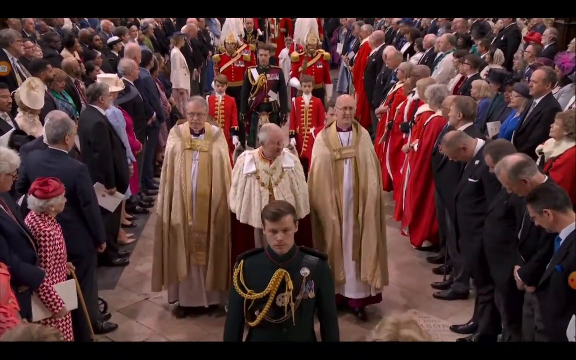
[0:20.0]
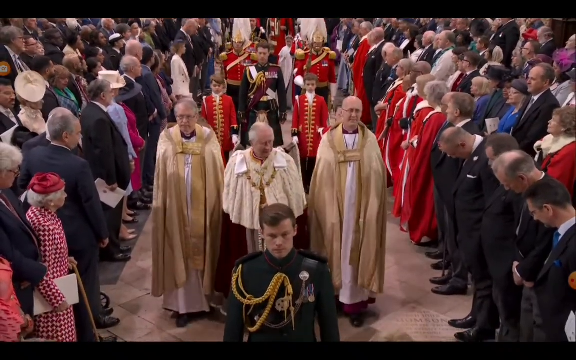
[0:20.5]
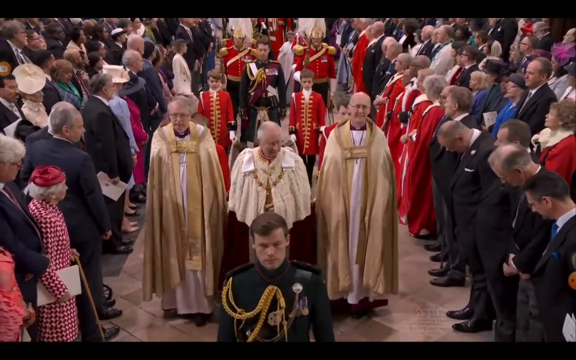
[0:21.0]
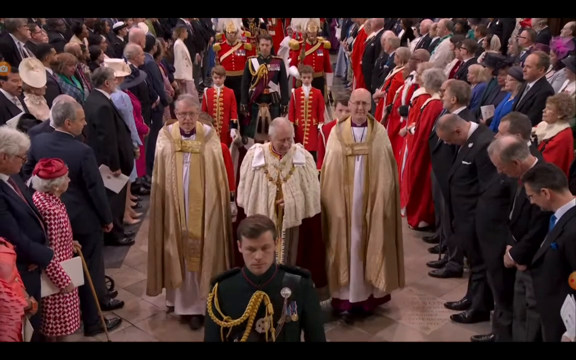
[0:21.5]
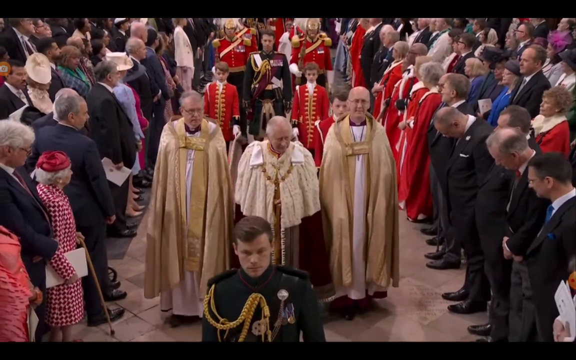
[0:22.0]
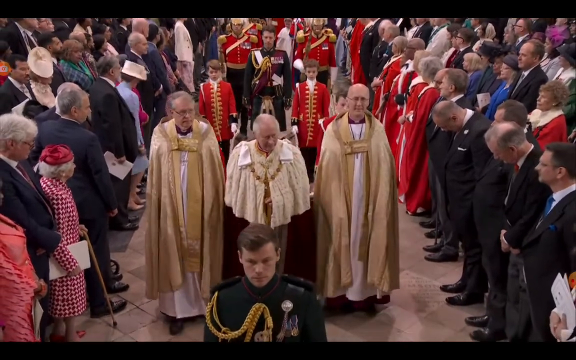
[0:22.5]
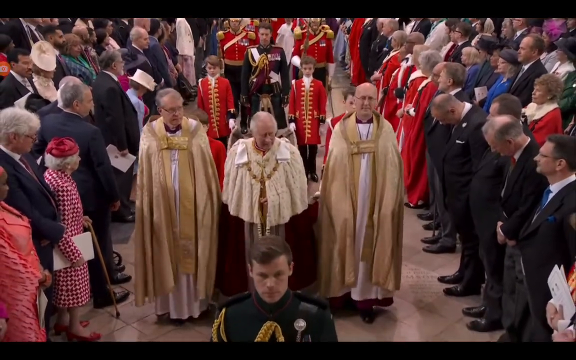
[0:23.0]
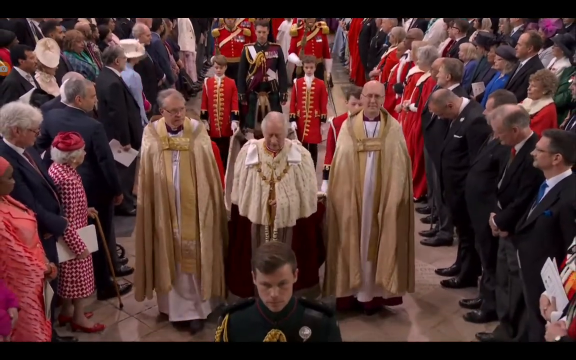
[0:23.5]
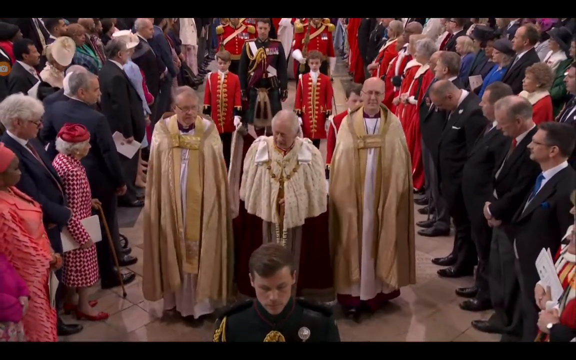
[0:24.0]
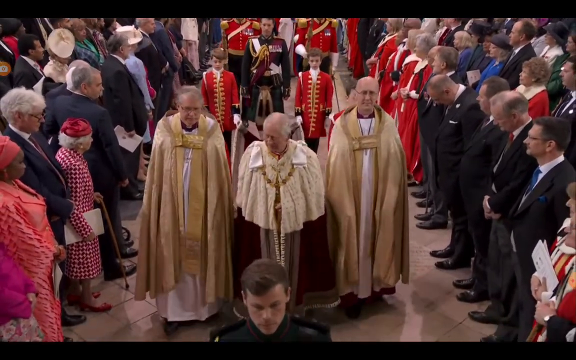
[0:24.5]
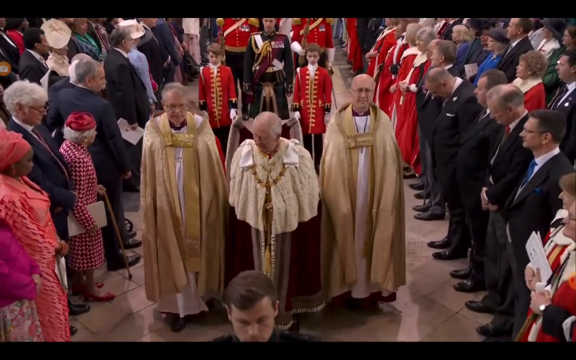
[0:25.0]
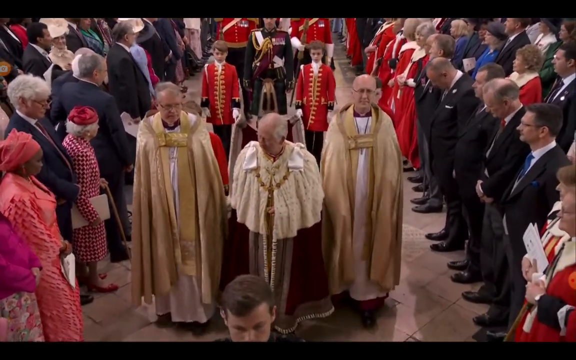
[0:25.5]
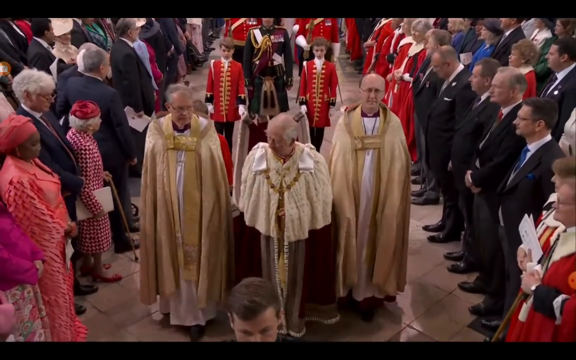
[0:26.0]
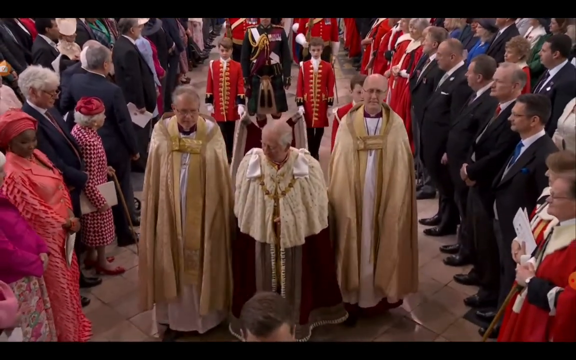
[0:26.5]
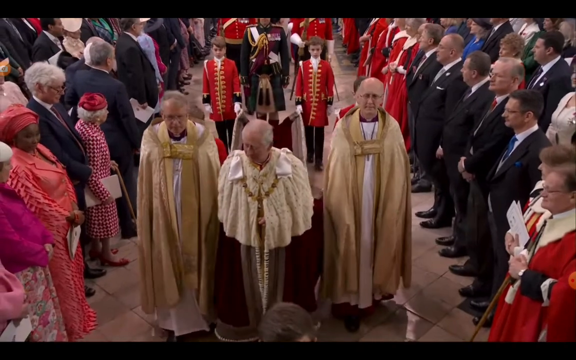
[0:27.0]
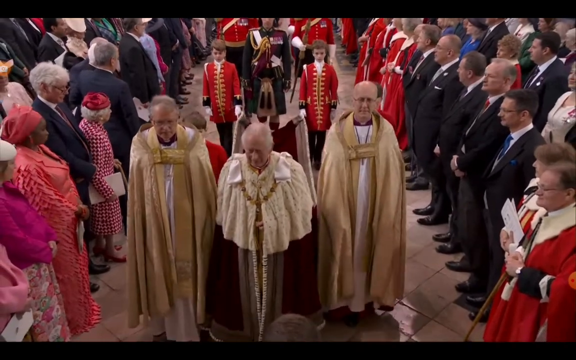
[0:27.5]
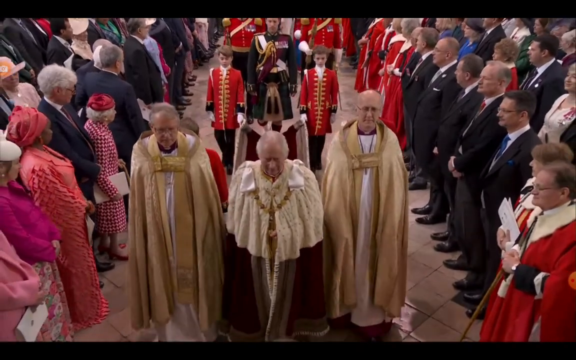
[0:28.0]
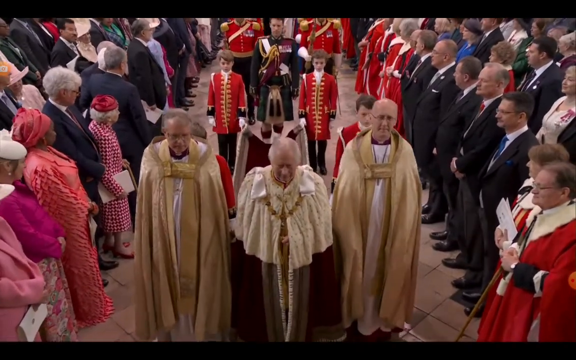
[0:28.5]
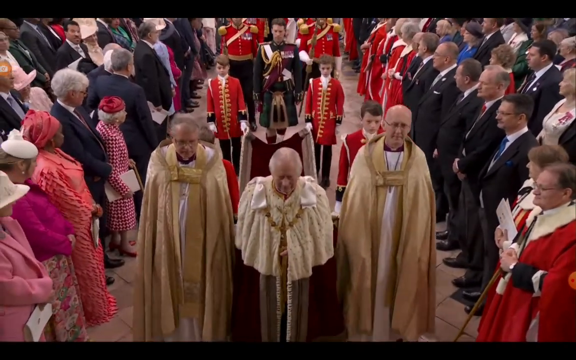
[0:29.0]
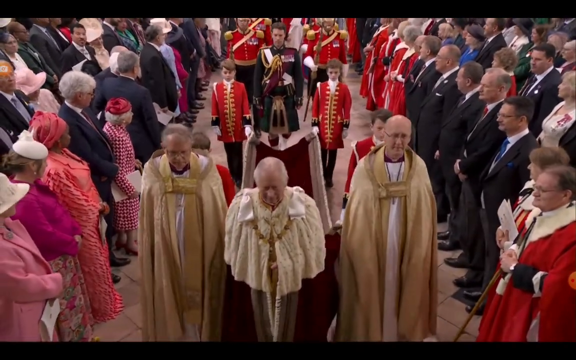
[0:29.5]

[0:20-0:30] Prince Charles continues down the aisle with archbishops on each side of him, while people dressed in uniforms and people dressed in red and gold march behind him. The cathedral is packed with people, everyone dressed in their finery: the men are all in suits and most of the women are wearing hats. The mood is very somber. Prince Charles sometimes looks to the side at the people who have come to watch the ceremony, but mostly he faces front. The people seem very enwrapped in what is going on.